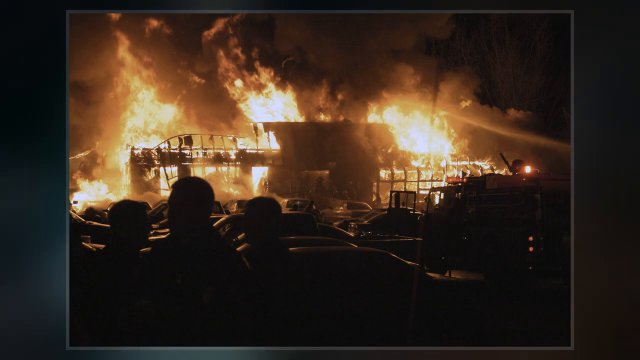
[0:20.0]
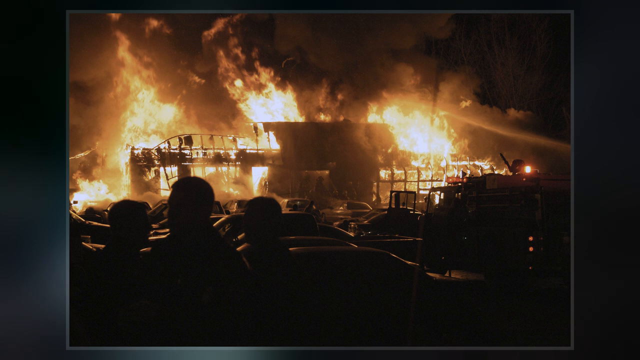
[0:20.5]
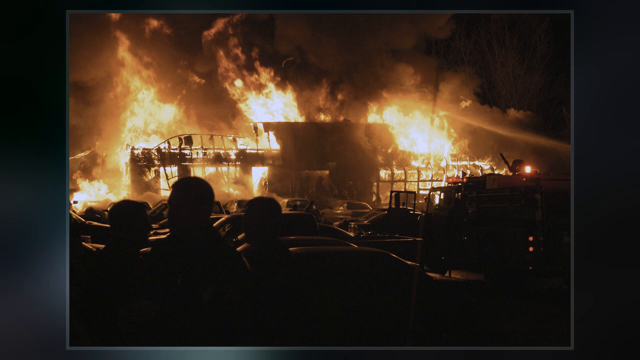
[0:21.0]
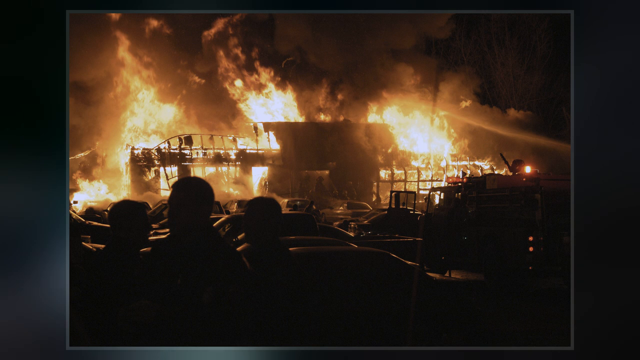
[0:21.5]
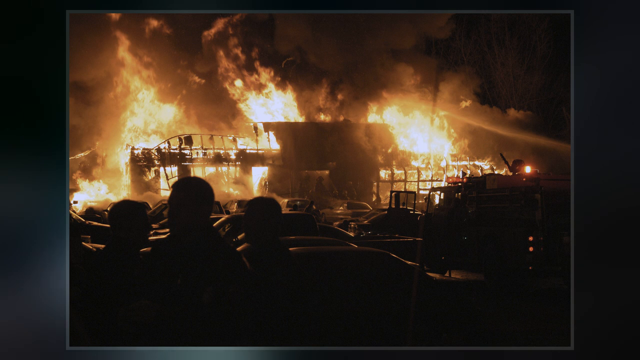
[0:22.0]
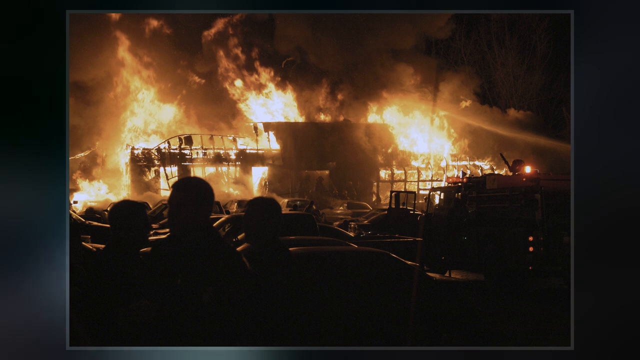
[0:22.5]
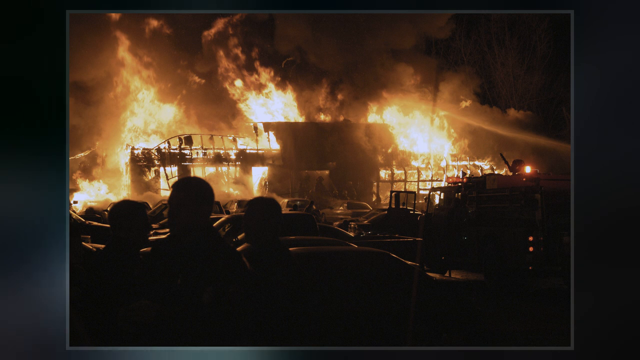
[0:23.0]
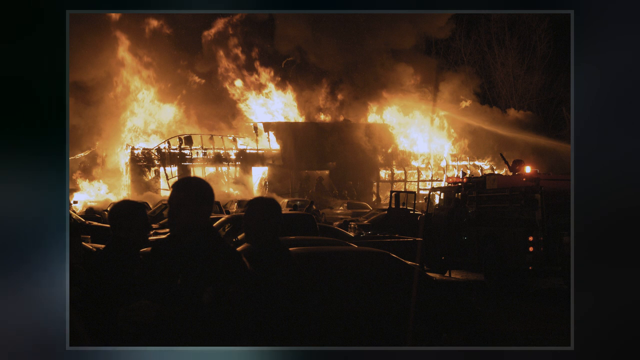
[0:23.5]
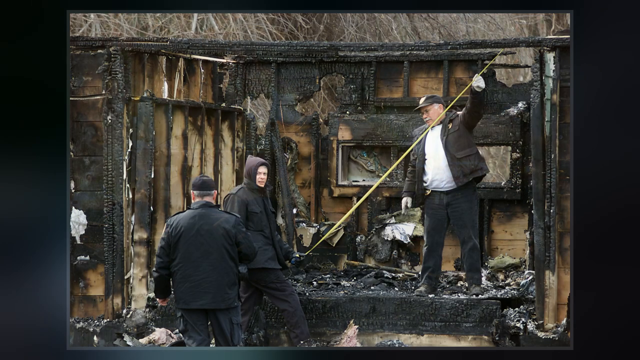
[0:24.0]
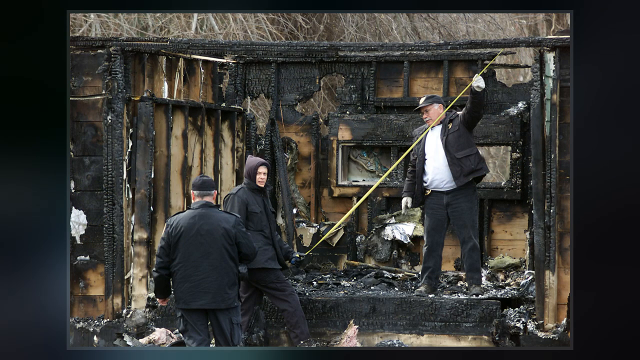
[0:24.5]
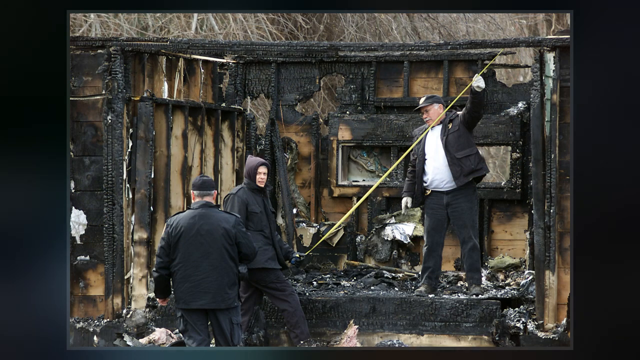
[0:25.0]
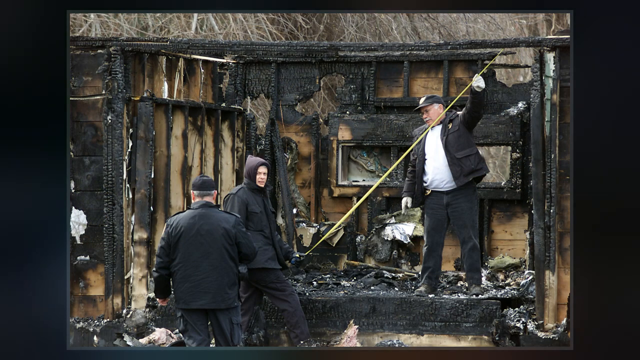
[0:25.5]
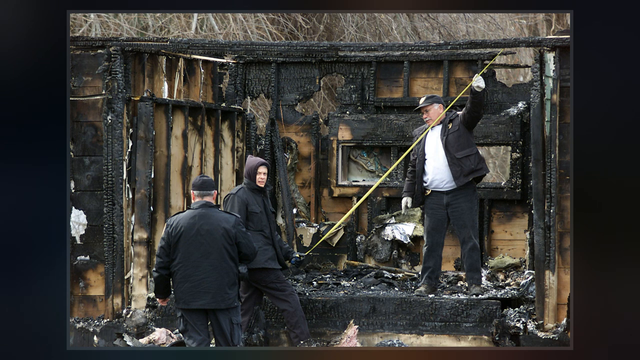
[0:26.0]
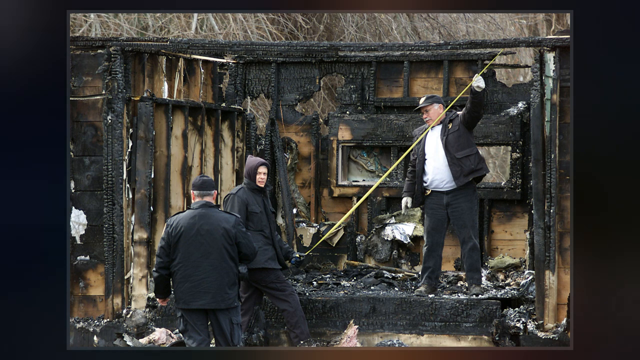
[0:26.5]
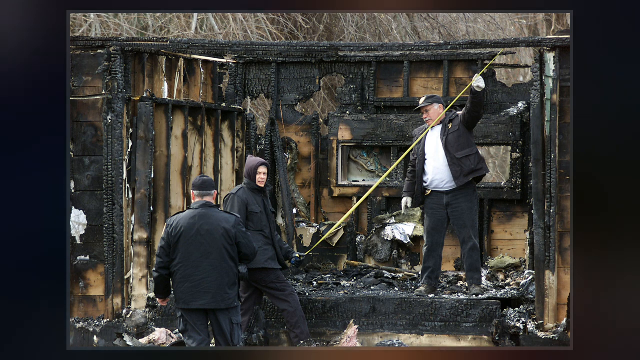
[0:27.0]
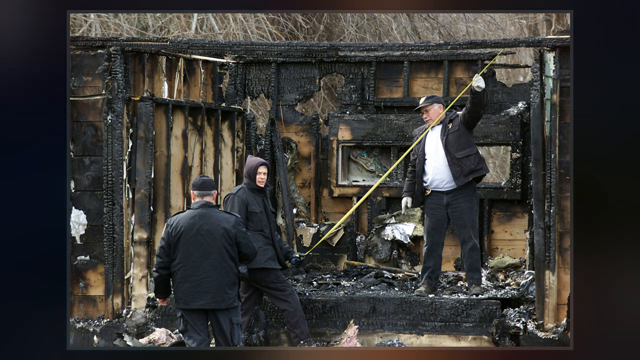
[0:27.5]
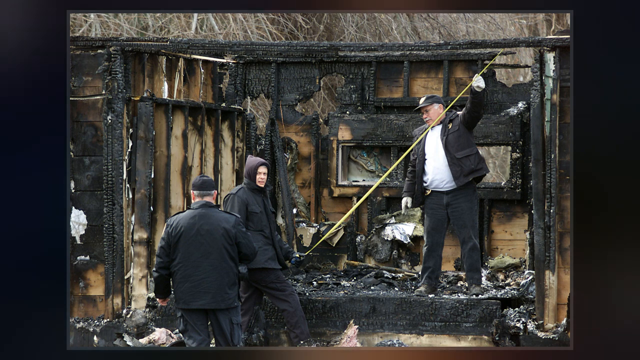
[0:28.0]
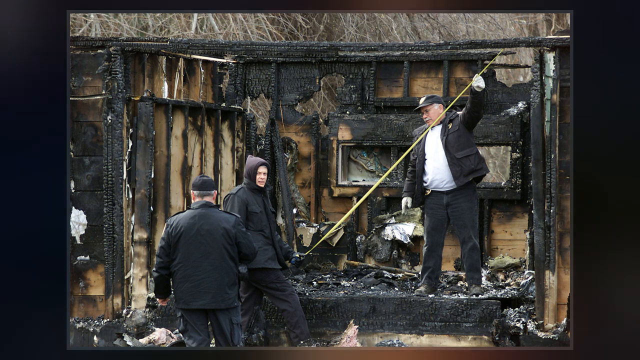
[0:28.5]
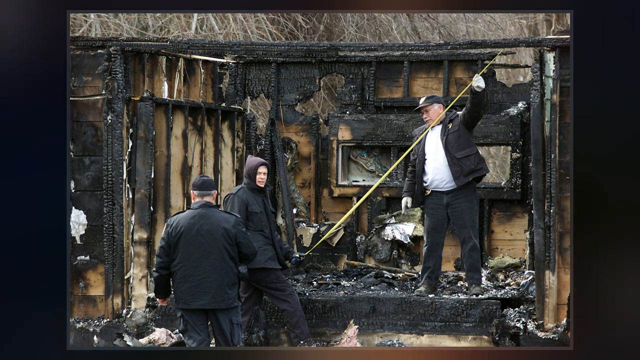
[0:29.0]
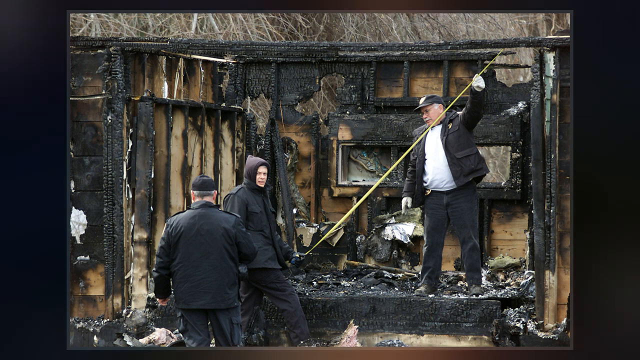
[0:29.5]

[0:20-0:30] A still image shows a building on fire at night, with a dark sky. The image is taken from quite a distance away, and the whole building, which is quite large, is up in flames. There appears to be a stream of water coming in from the right-hand side, something like what fire engines would use to put out a fire. Lots and lots of cars are parked in and around the burning building. The video then cuts to another still image of people standing in the midst of charred remains. It looks to be daytime, judging by the sunlight. There are three people, all wearing black, in thick coats; two wear hats and one has their hood up. It looks like it is probably around winter time. They appear to be measuring, and they are holding a long, thin, yellow measuring tape.